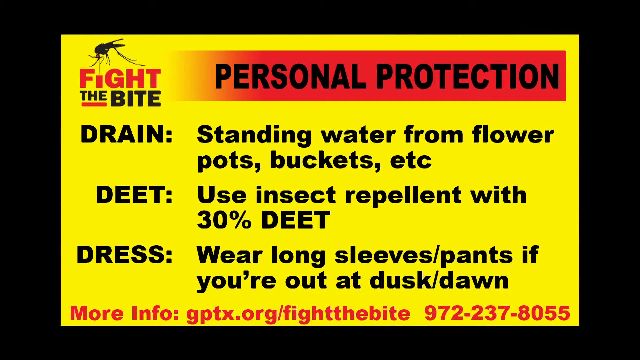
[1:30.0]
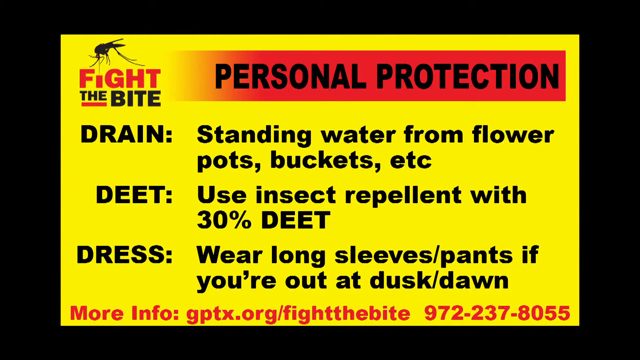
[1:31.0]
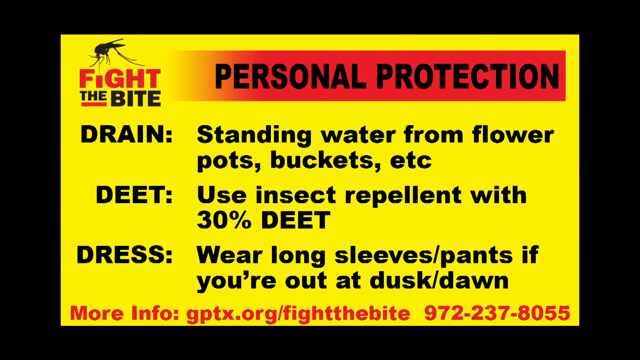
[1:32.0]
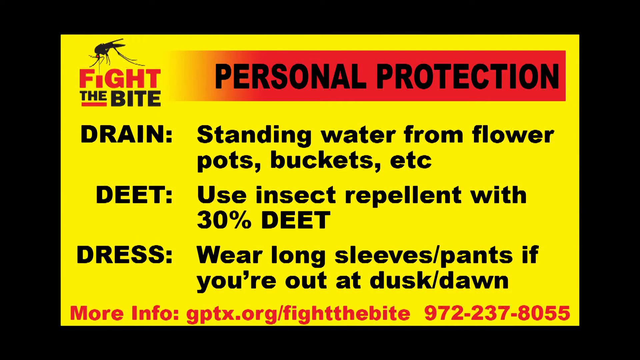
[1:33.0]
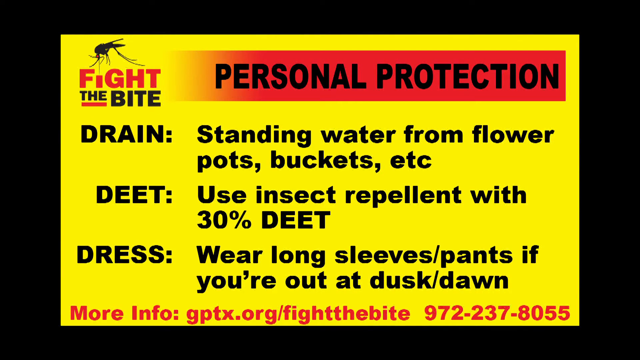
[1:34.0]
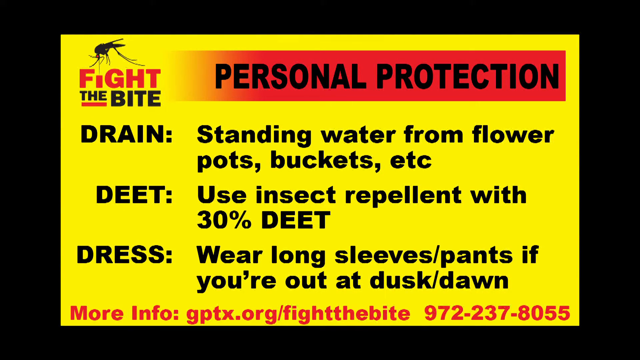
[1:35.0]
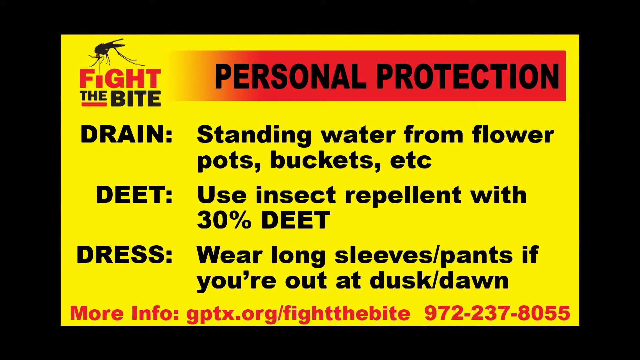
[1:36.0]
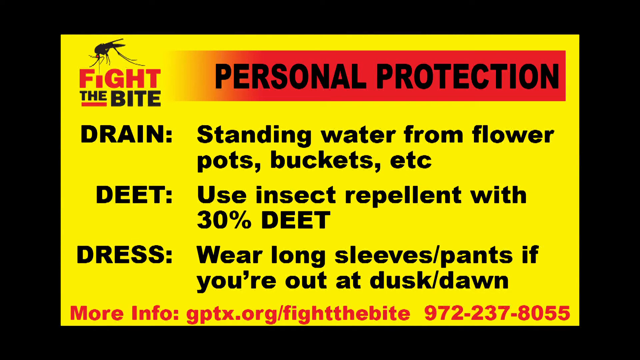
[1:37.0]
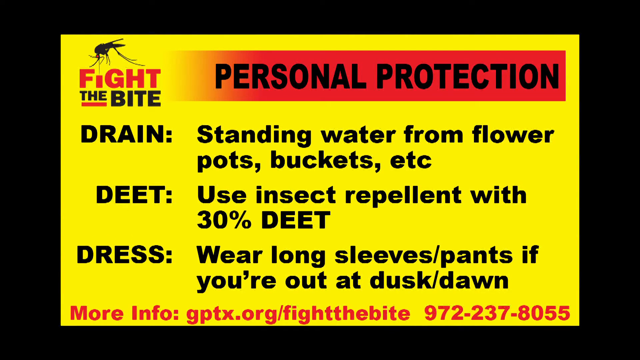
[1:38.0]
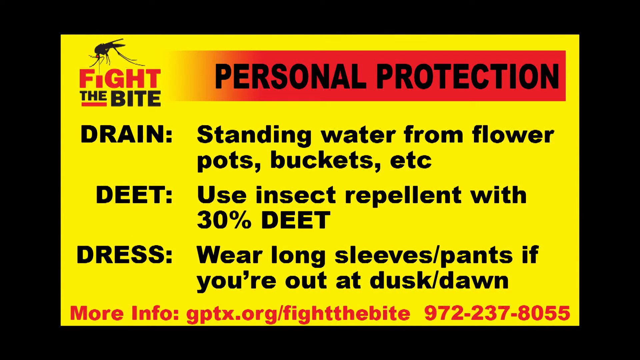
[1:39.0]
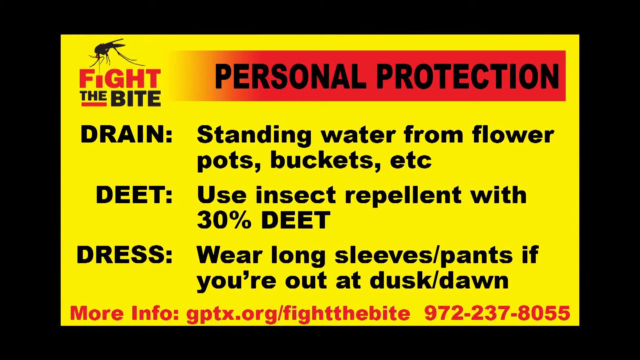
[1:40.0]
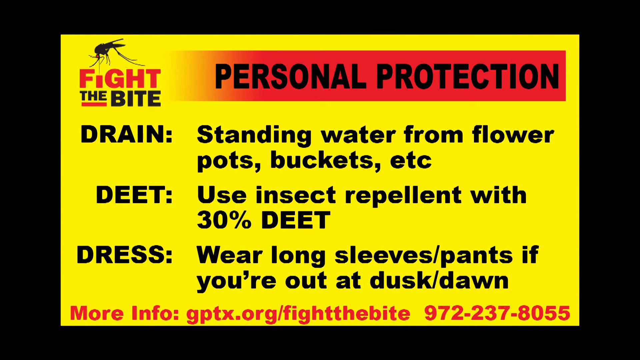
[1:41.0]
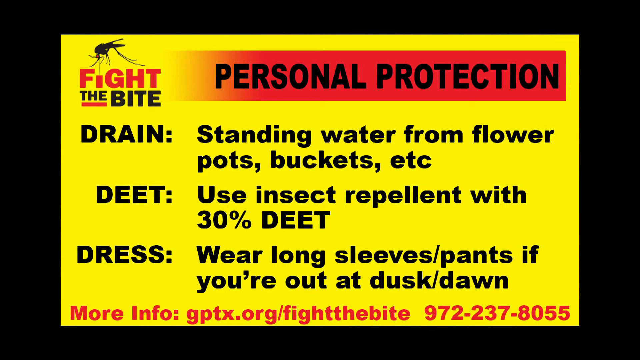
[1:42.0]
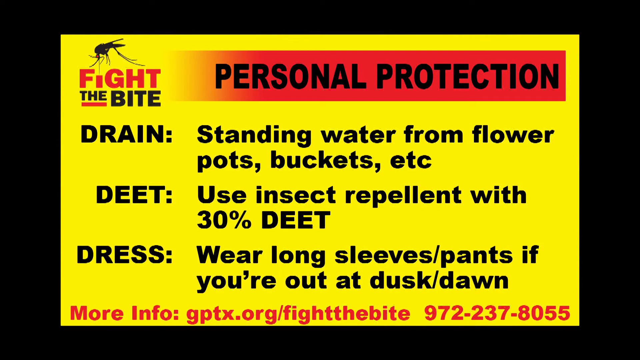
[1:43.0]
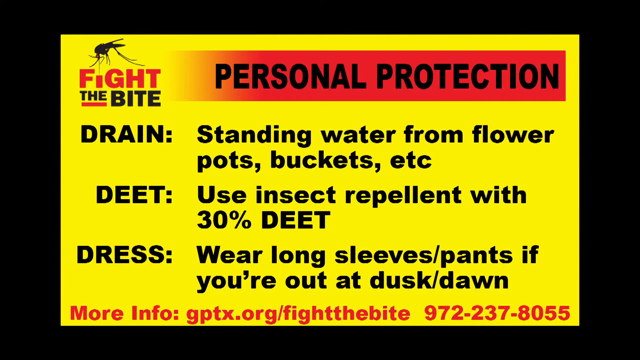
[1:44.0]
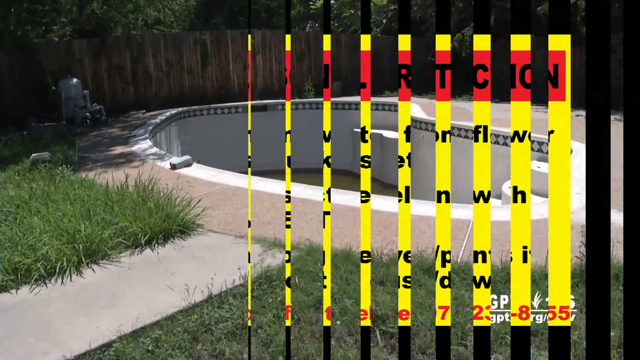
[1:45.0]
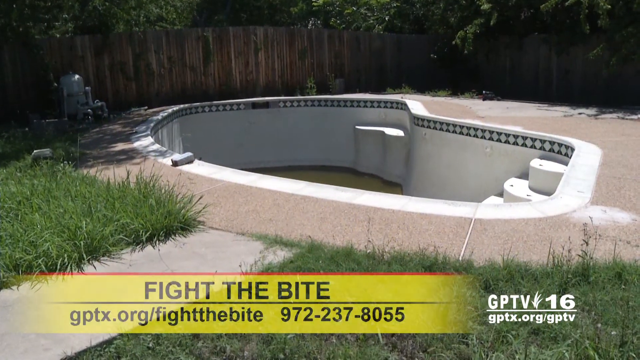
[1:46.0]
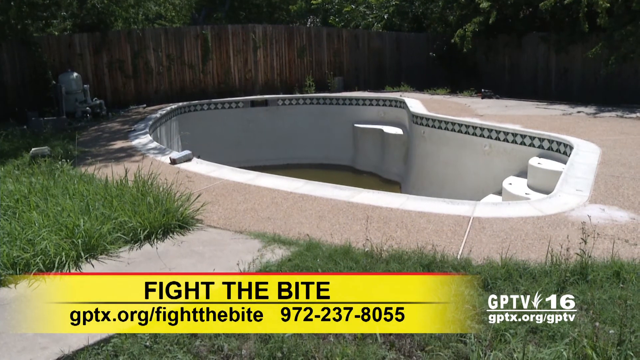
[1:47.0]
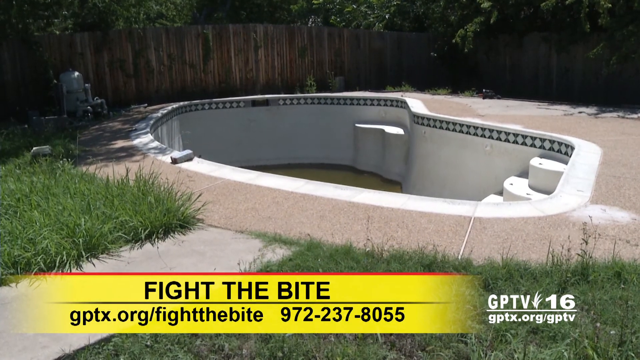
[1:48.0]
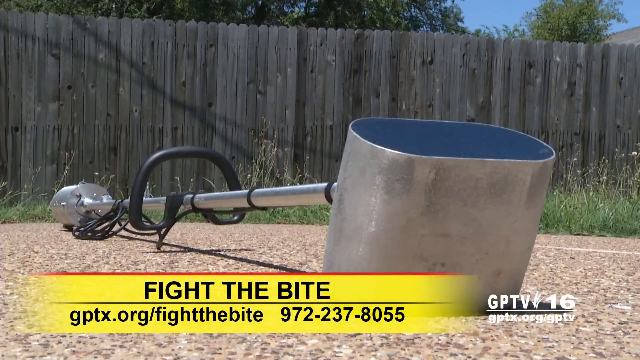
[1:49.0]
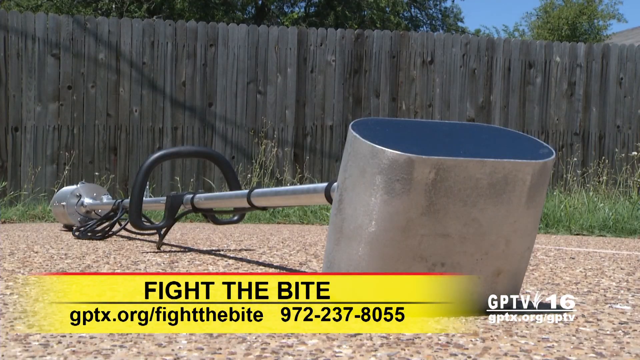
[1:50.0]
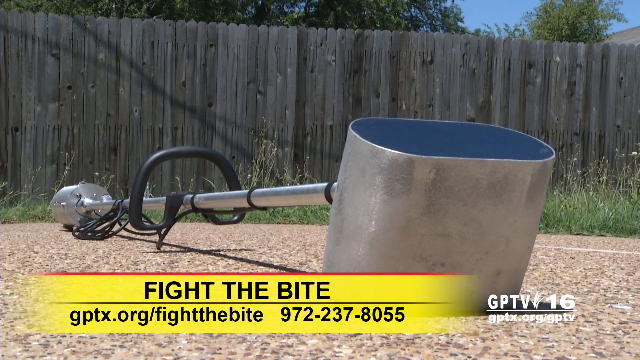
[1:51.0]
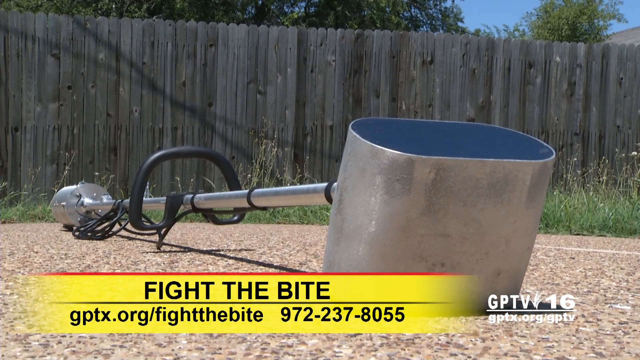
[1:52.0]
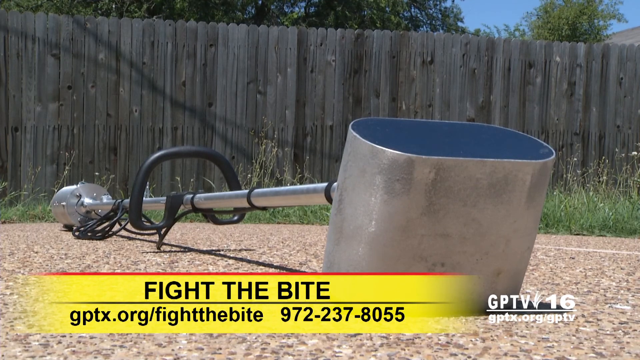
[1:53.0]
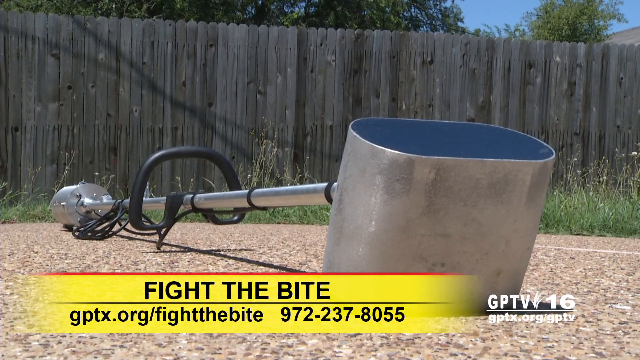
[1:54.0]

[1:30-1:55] Multiple lines of text are on screen, reading "fight the bite personnel protection drain standing water from flower pots buckets, etc DEET use insect repellent with 30% DEET dress wear long sleeves pants if you're out at dusk/dawn more info info GPTX org/fight the bite 972-237-8055". The video transitions to a swimming pool that has largely been drained except for green stagnant water at the very bottom. A yellow banner appears with text reading "Fight the Bite, gptx.org/Fight the Bite, 972-237-8055". The video then cuts to a close-up of a metal device with a cylinder on one side and an oval-shaped catcher on the other, resting on a gravel footpath. In the background there is a grayed wooden fence, with long weeds growing out of someone's backyard lawn.